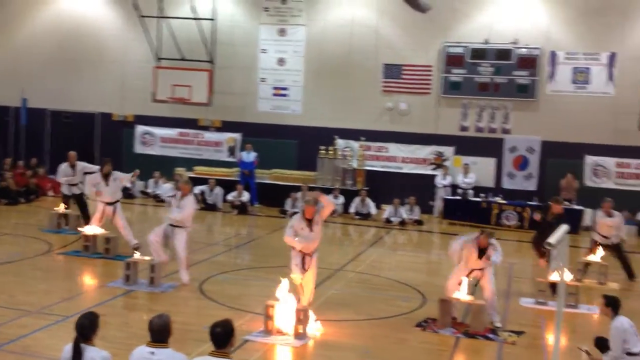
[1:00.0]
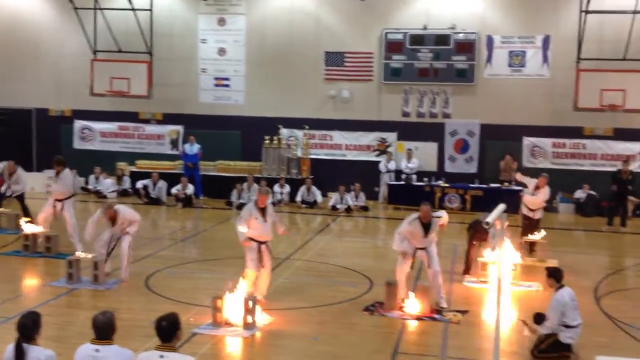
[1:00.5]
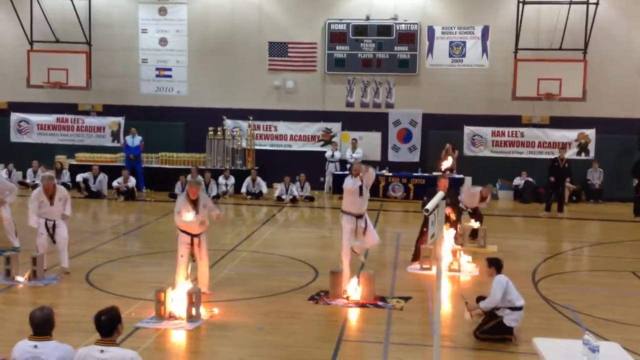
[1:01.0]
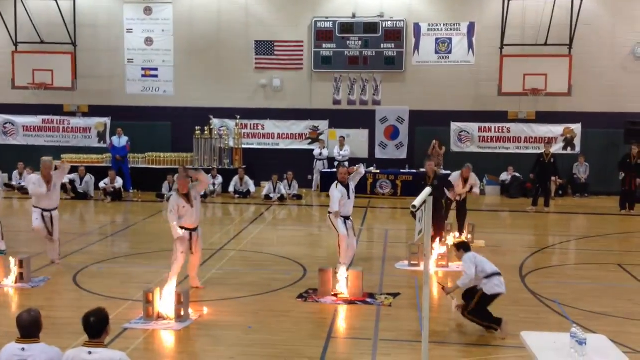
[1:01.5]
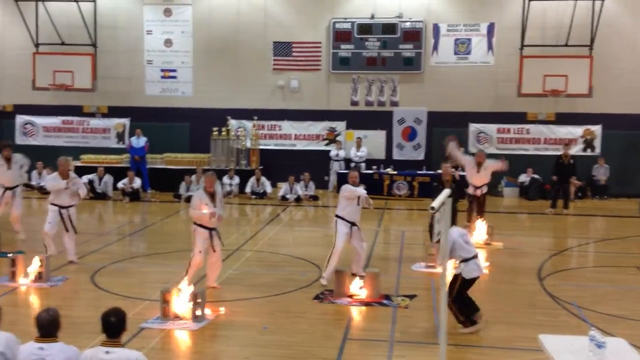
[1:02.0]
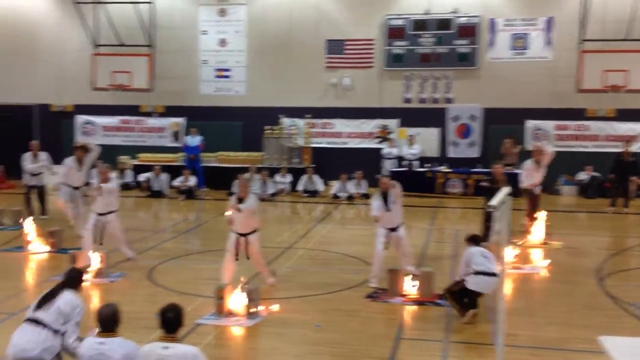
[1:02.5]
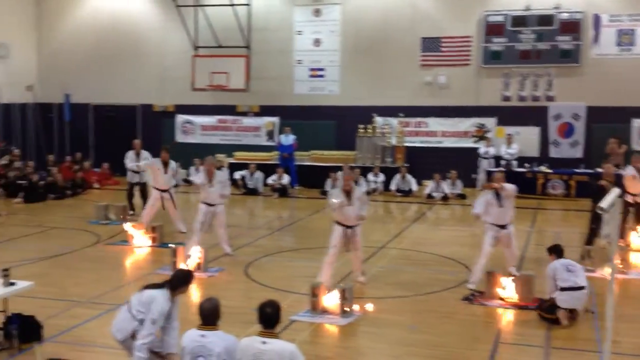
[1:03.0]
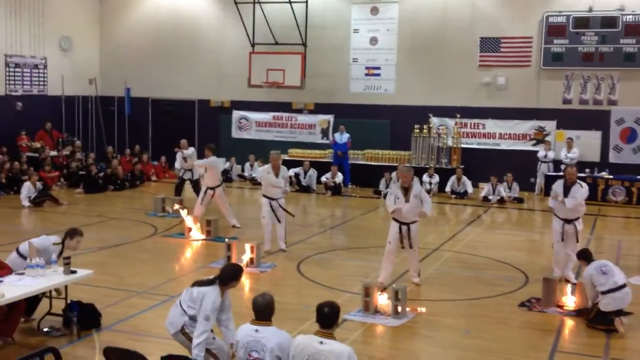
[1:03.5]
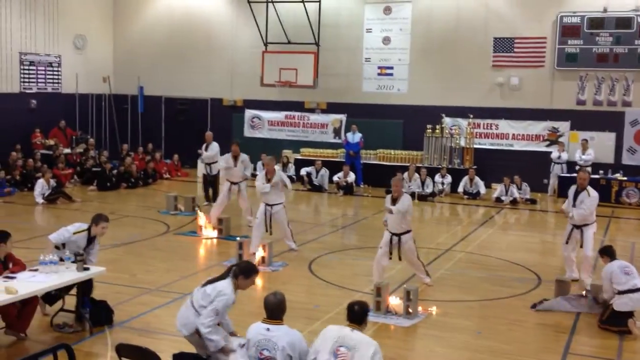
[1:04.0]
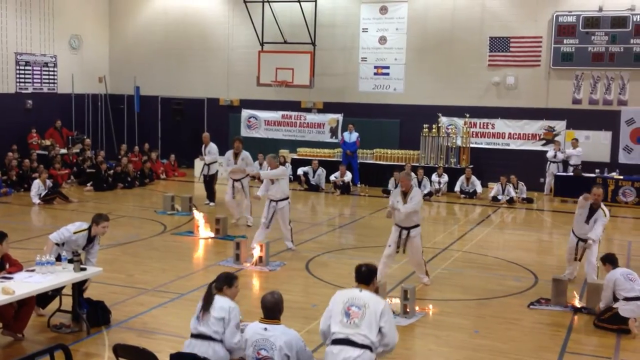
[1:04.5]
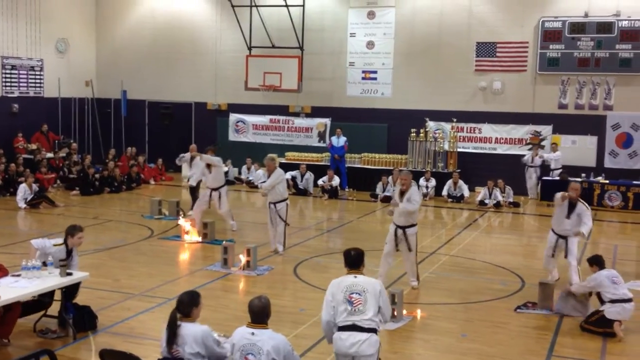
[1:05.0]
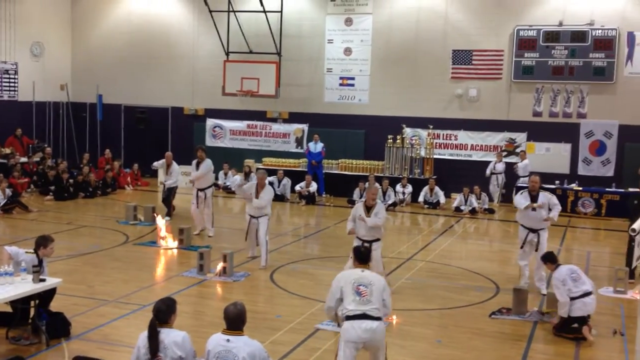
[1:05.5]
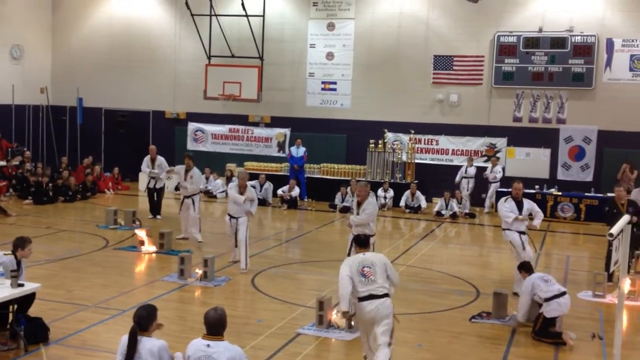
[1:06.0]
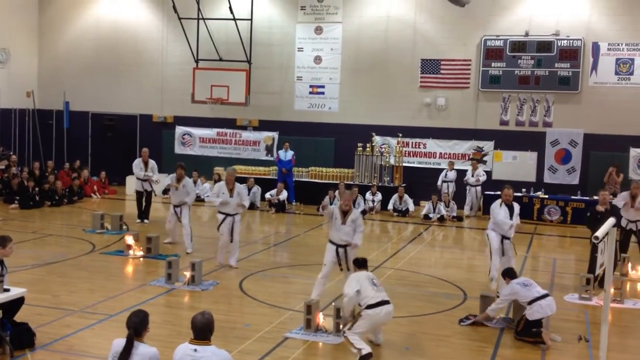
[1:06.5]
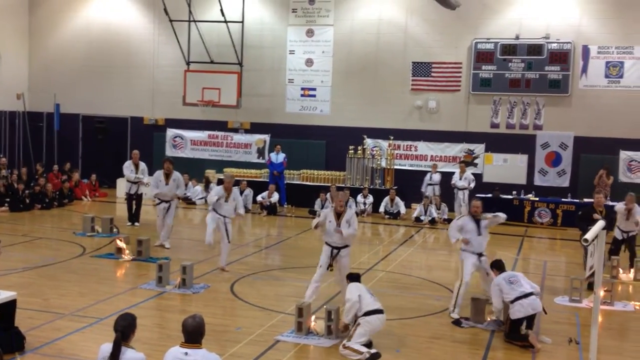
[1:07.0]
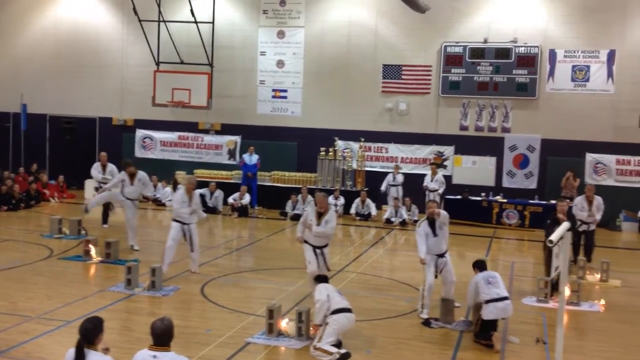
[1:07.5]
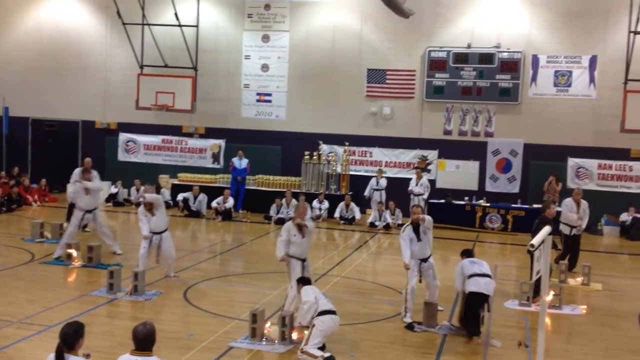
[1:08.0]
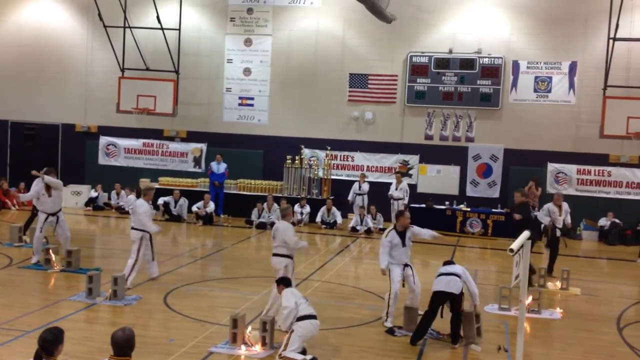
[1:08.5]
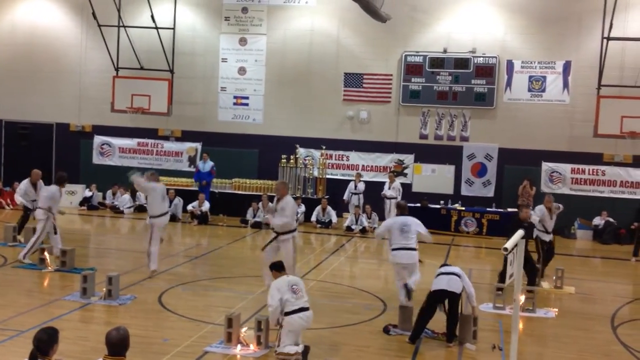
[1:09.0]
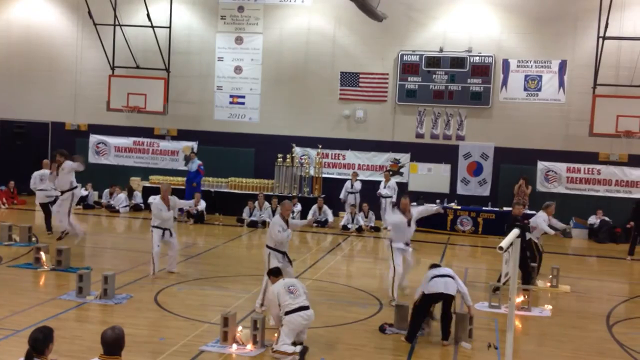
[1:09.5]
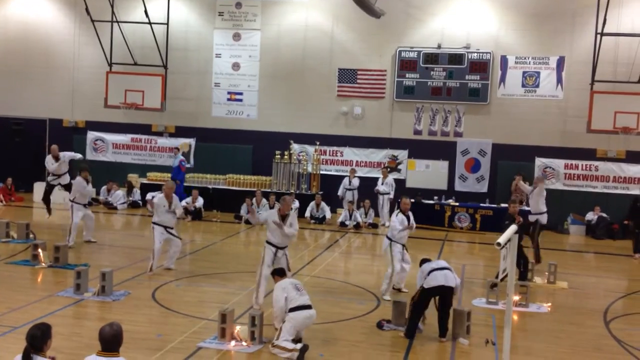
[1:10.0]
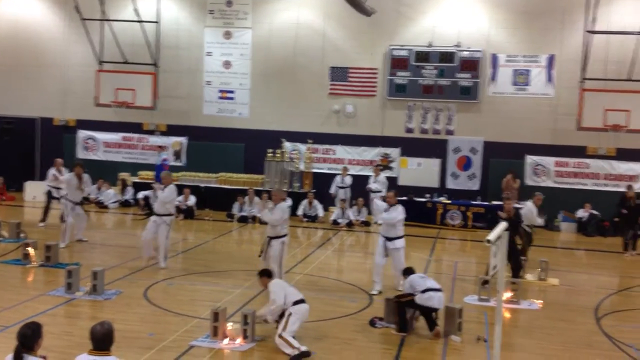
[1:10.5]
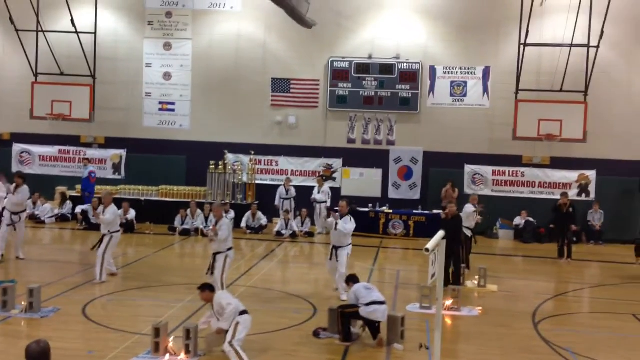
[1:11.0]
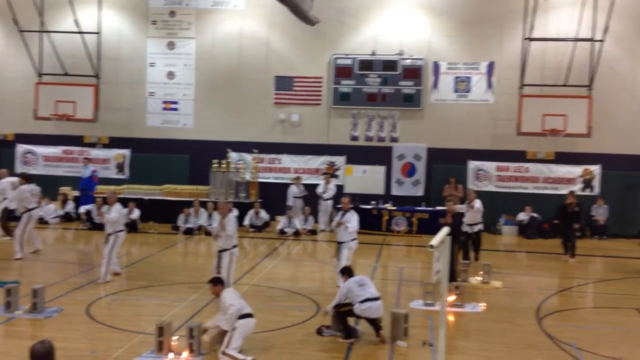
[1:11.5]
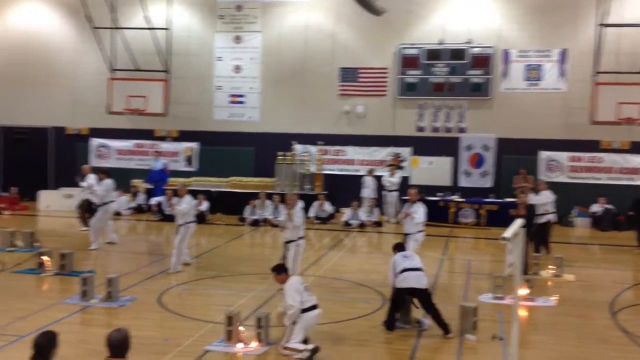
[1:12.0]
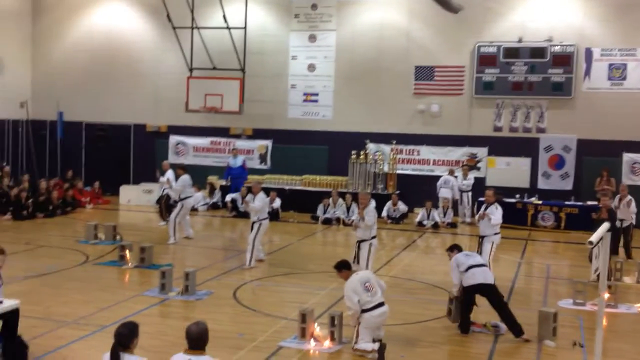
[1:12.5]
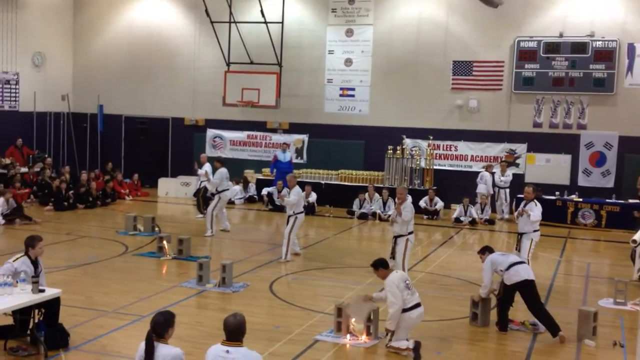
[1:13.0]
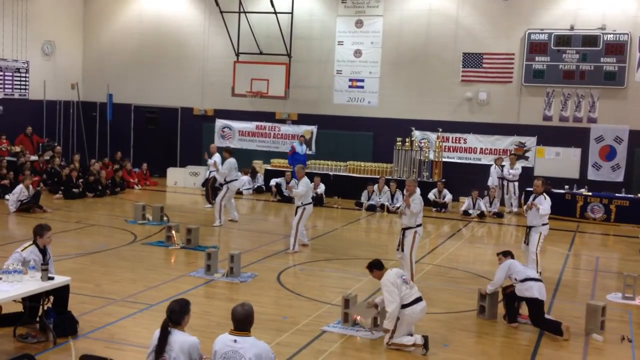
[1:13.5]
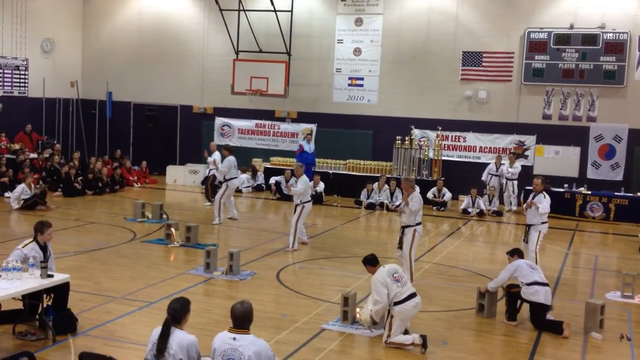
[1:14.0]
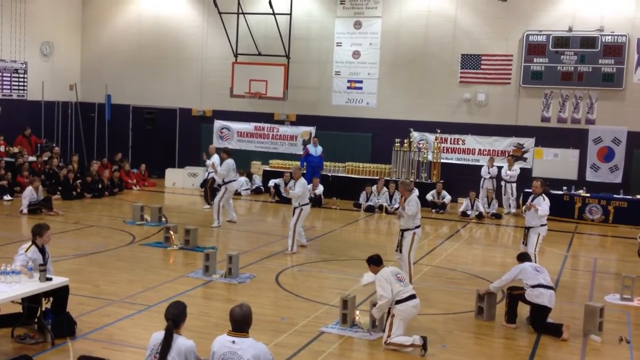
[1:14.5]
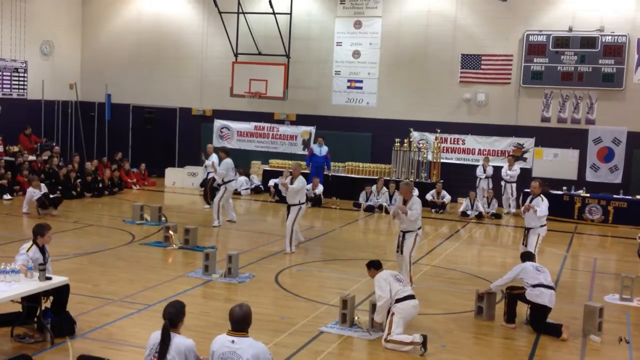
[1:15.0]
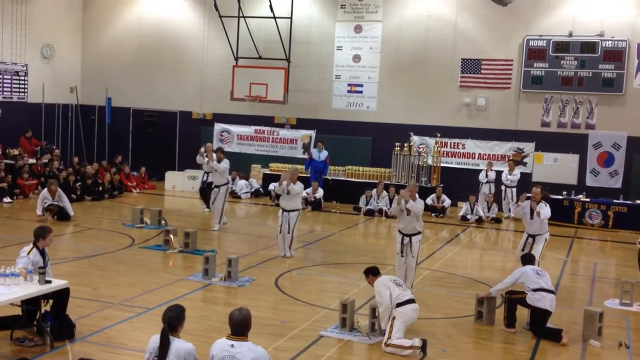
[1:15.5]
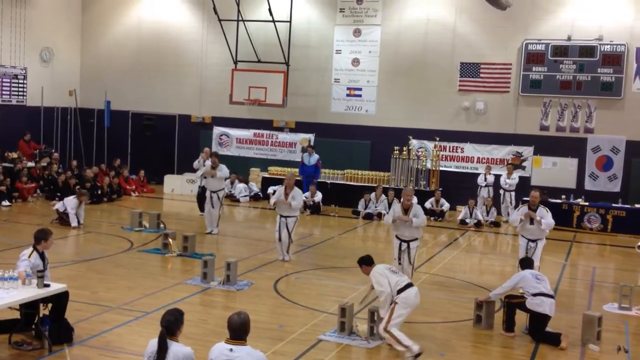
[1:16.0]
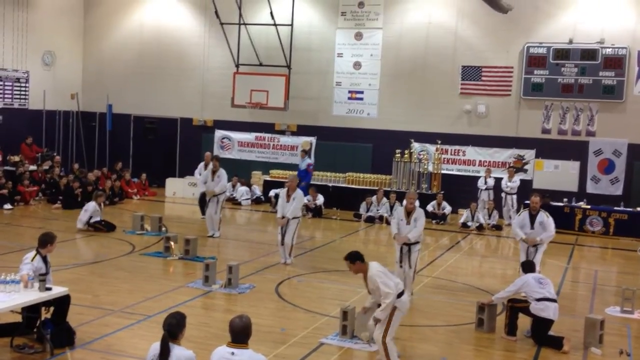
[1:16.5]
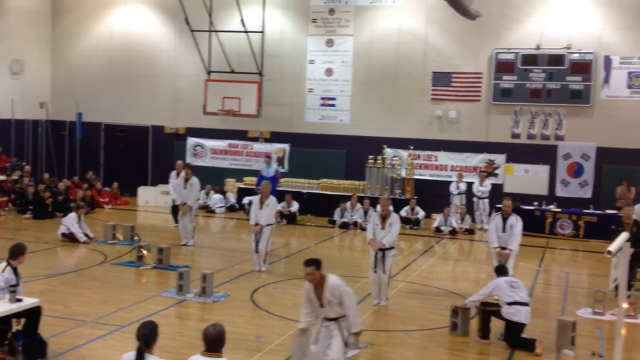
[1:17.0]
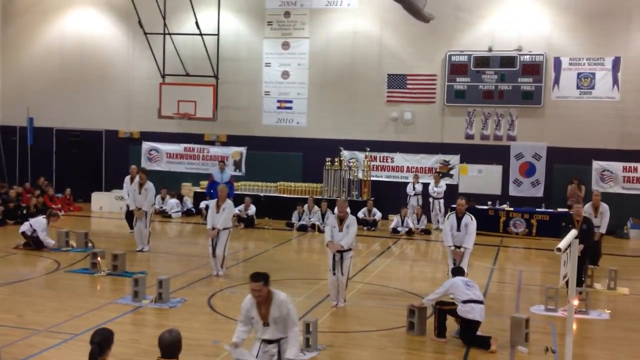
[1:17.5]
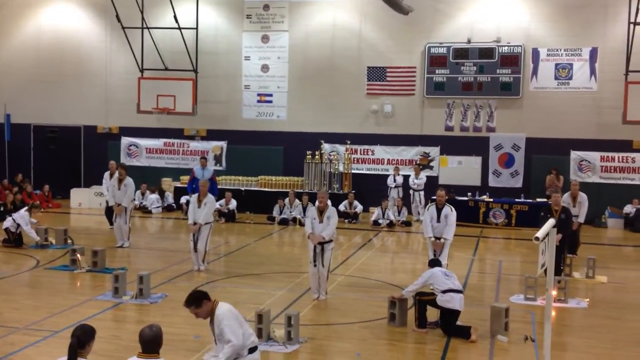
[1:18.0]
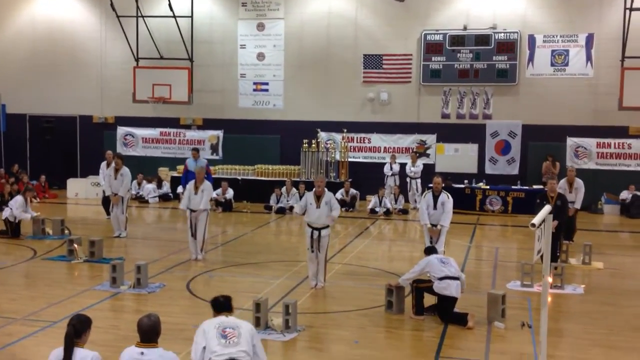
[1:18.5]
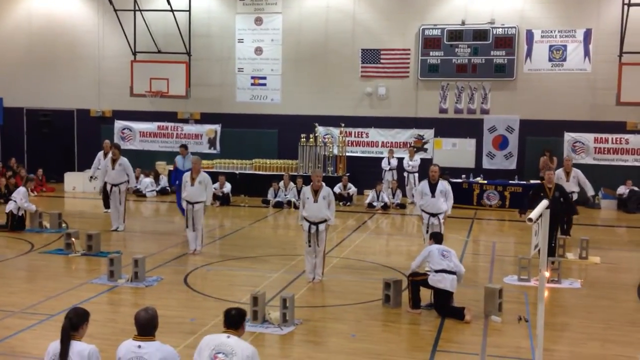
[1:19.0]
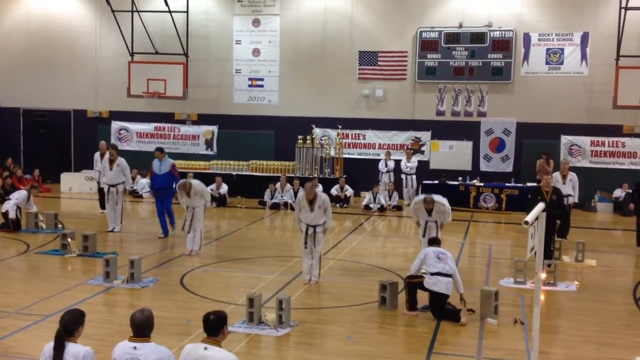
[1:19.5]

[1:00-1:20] All the performers have punched through their flaming wood, but the man in front has caught fire a little on his suit. At the very beginning, one man comes up to the front with a board and uses it to smother some of the fire, which is still burning heavily. The man in front keeps trying to put out the fire on his sleeve while continuing the movements, since he leads the group. No one else is on fire. The group keeps stepping, hopping, twisting, putting their arms out and punching in karate-like movements, then freezes in a kind of taekwondo pose. They step back together, put their hands down in front of them, then behind them, and bow. Everyone watches throughout the routine.